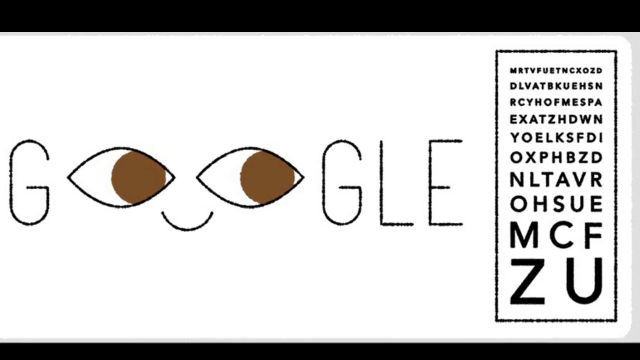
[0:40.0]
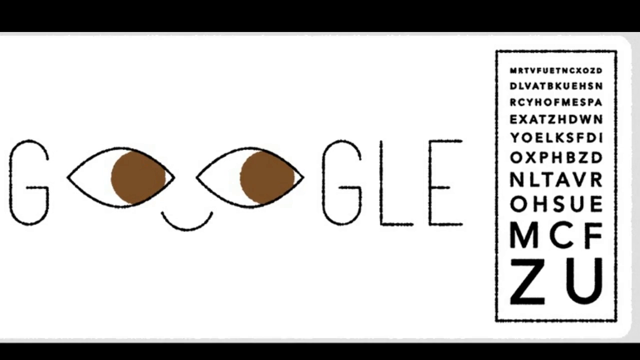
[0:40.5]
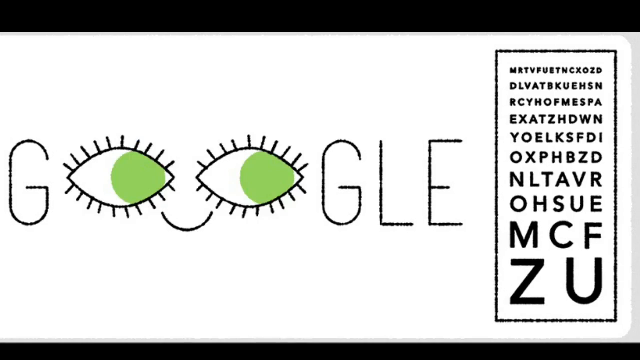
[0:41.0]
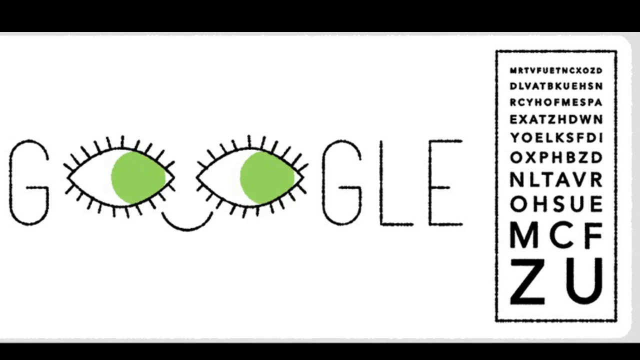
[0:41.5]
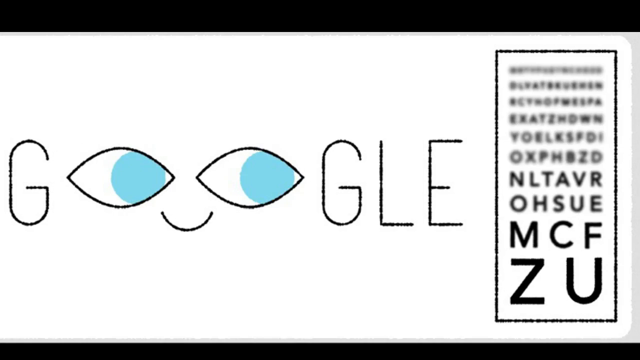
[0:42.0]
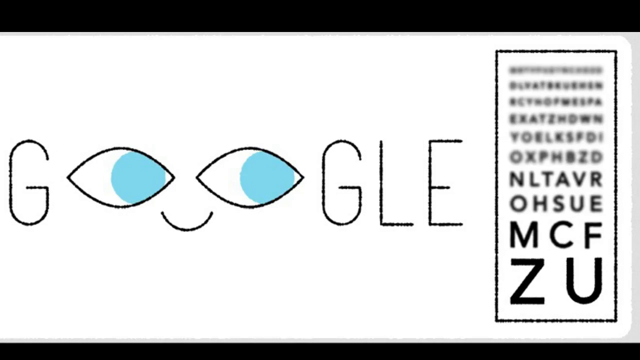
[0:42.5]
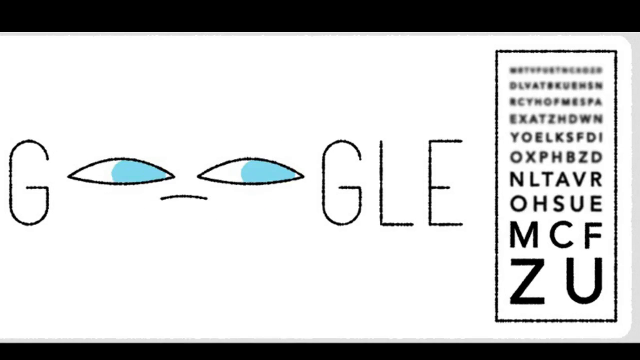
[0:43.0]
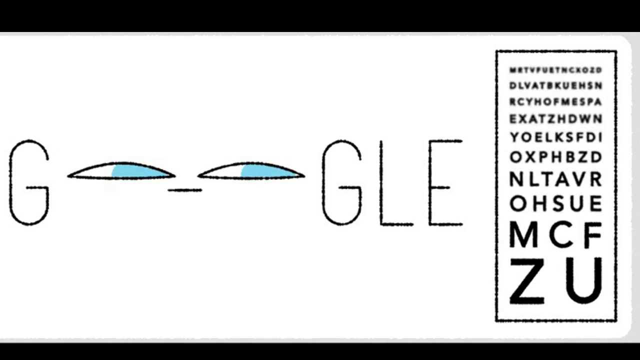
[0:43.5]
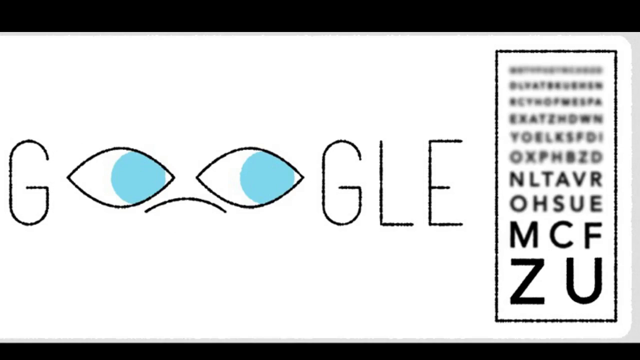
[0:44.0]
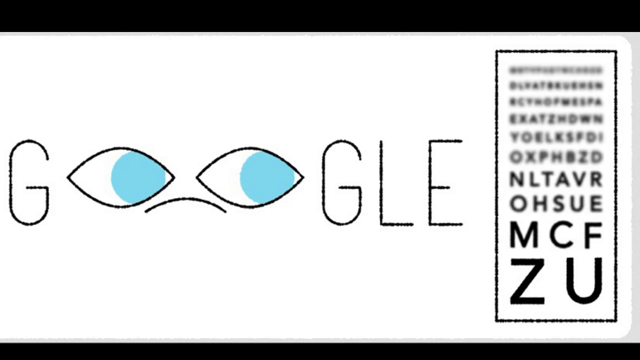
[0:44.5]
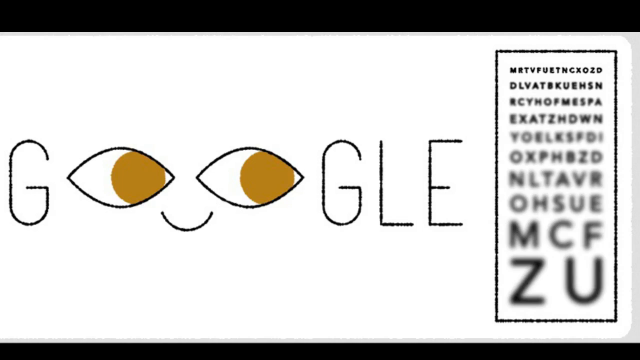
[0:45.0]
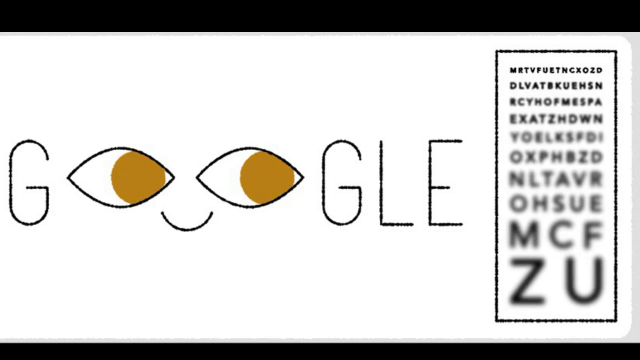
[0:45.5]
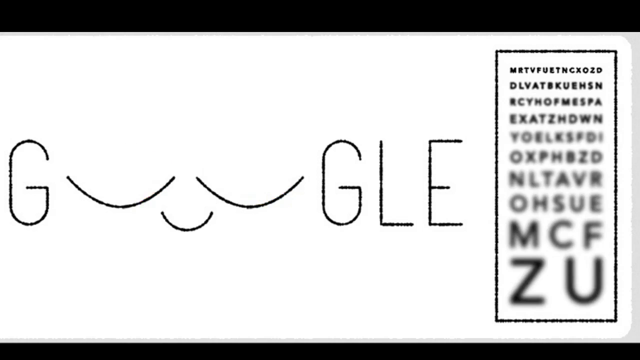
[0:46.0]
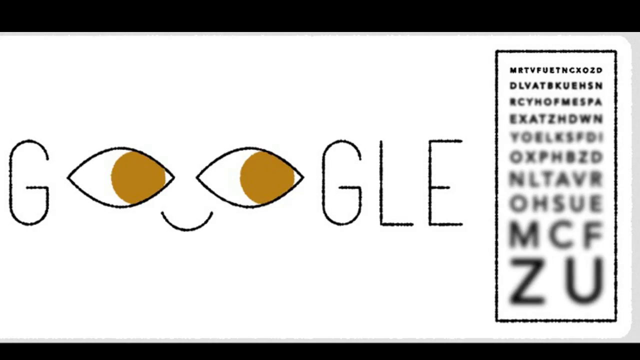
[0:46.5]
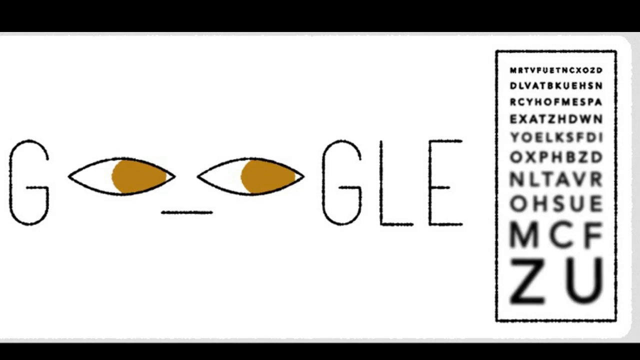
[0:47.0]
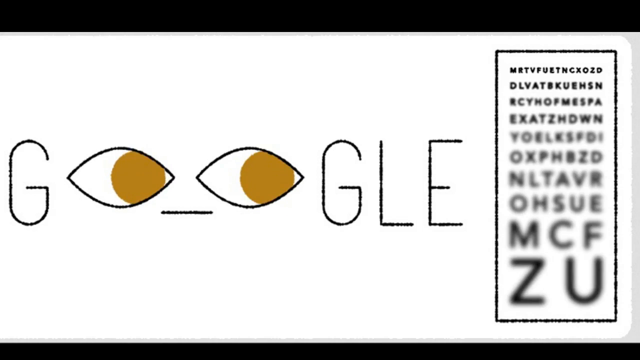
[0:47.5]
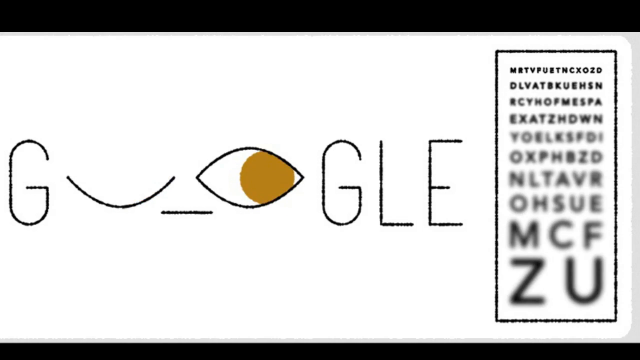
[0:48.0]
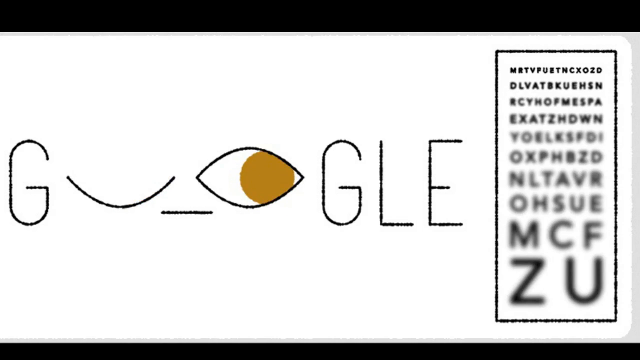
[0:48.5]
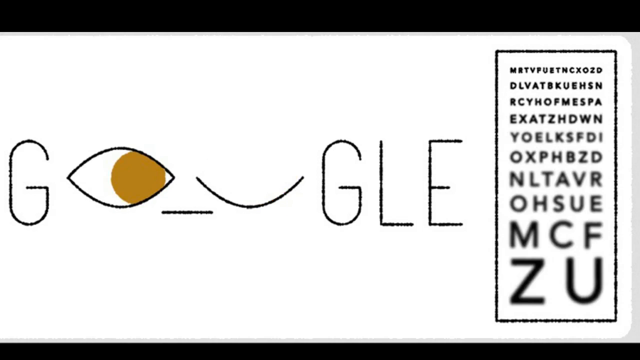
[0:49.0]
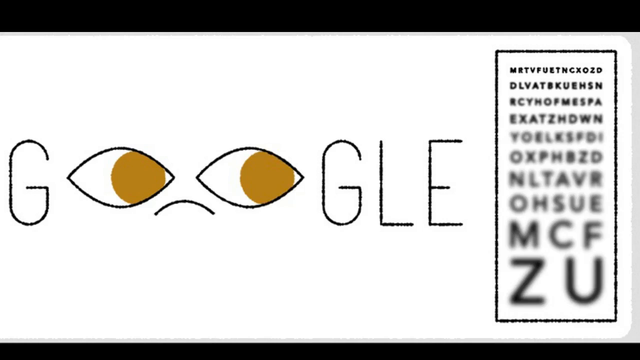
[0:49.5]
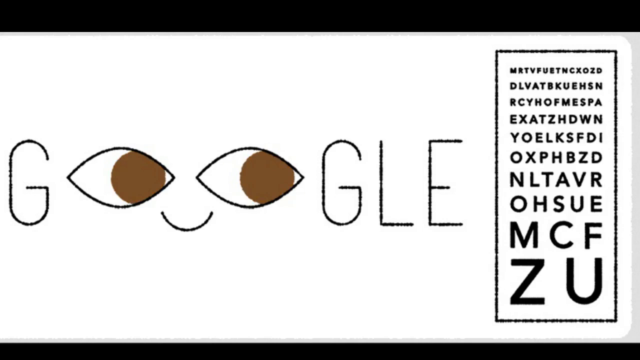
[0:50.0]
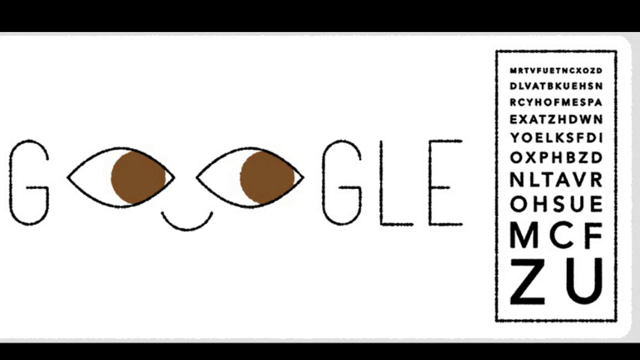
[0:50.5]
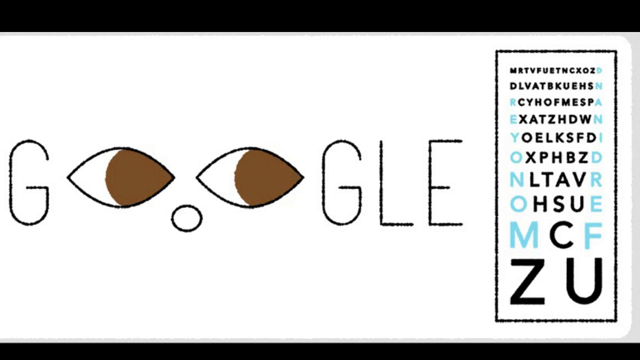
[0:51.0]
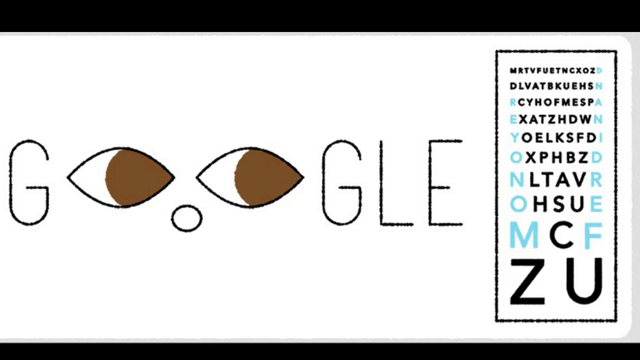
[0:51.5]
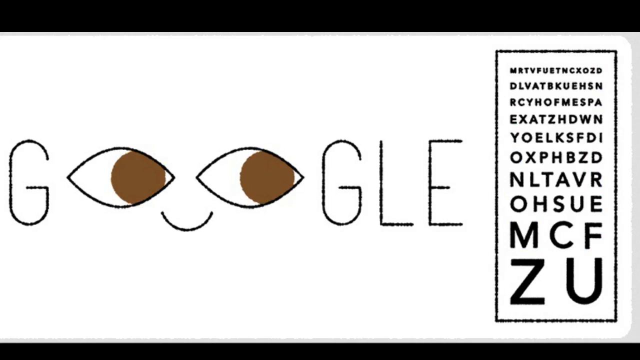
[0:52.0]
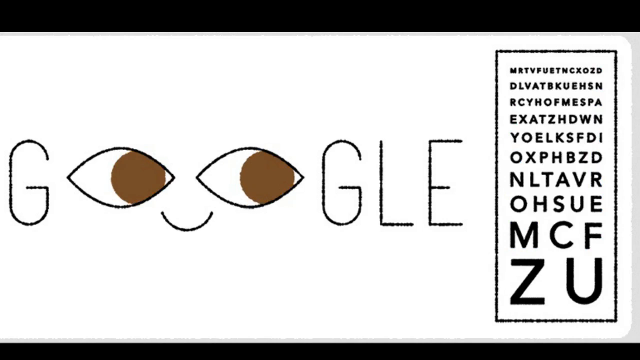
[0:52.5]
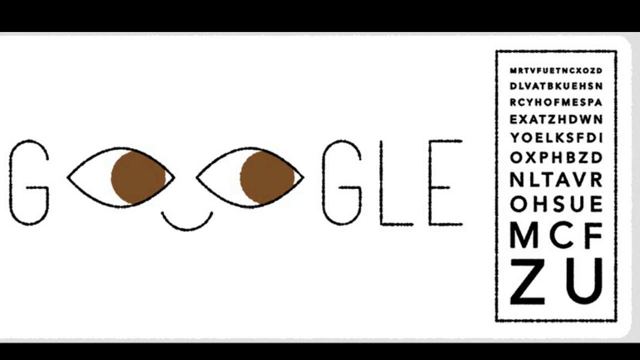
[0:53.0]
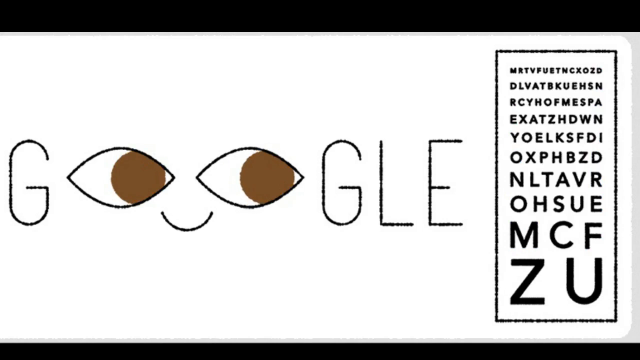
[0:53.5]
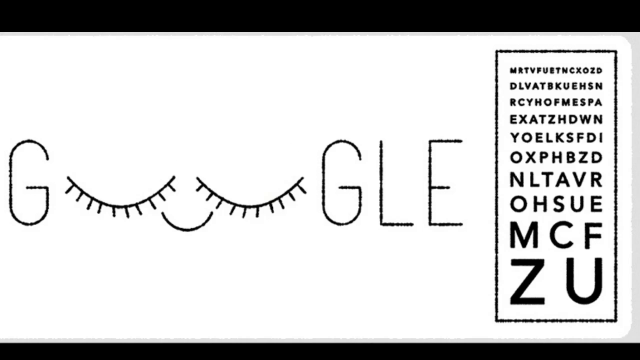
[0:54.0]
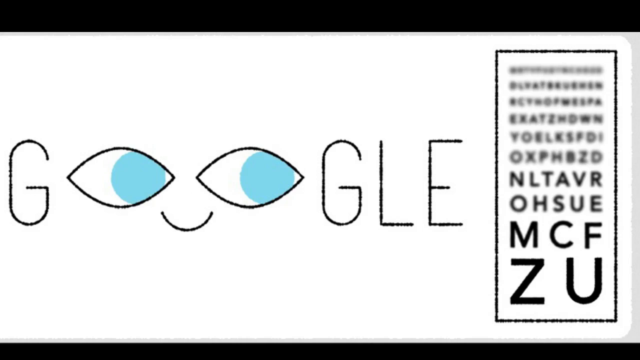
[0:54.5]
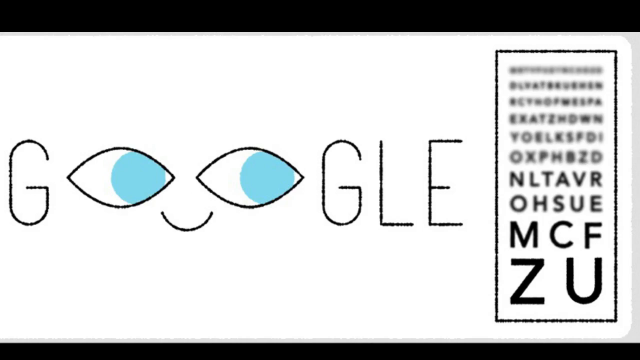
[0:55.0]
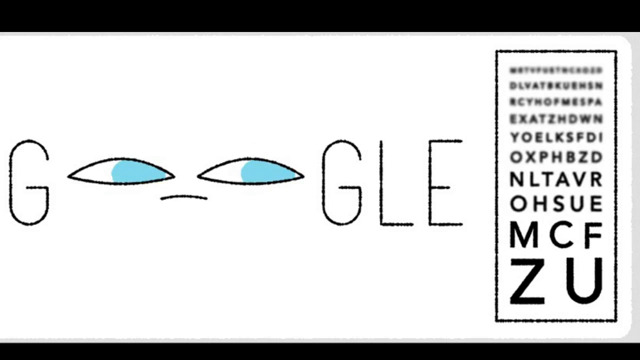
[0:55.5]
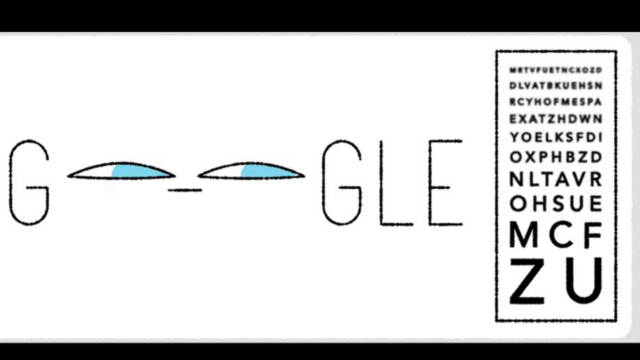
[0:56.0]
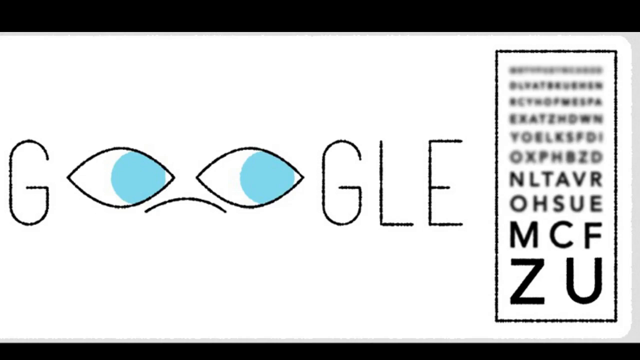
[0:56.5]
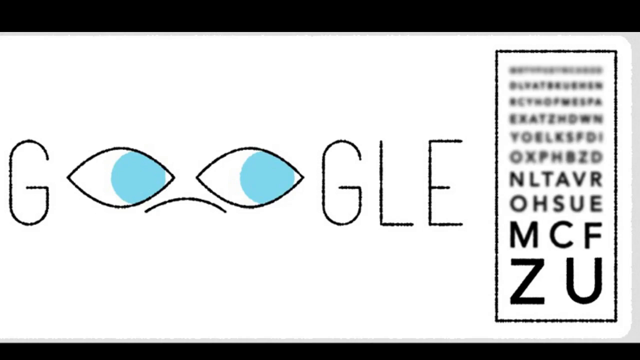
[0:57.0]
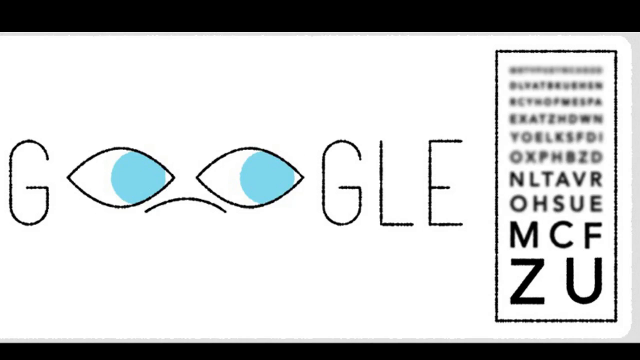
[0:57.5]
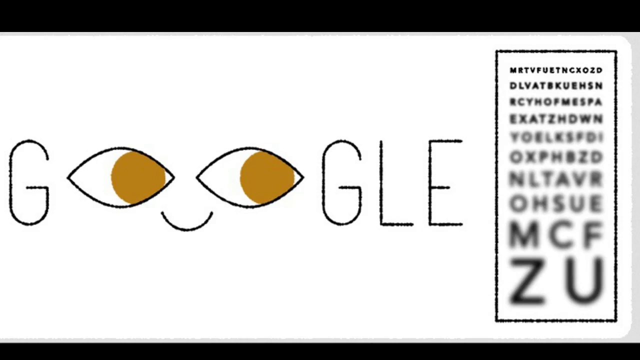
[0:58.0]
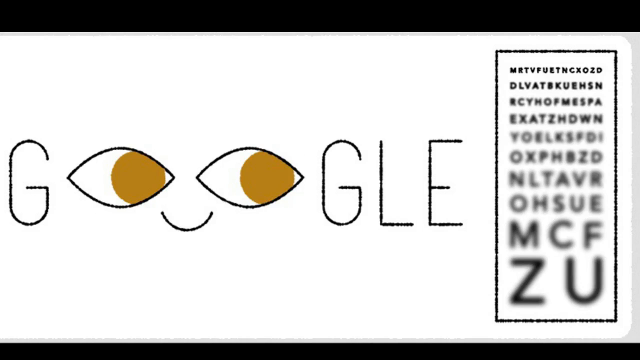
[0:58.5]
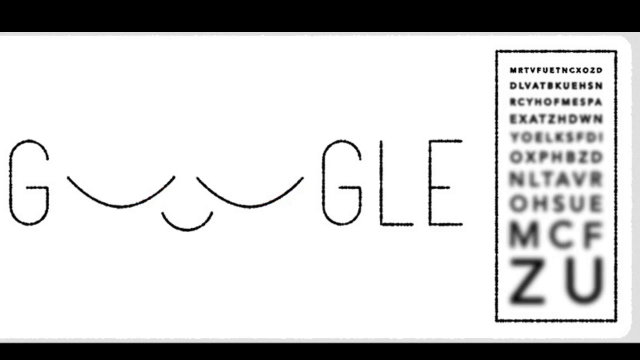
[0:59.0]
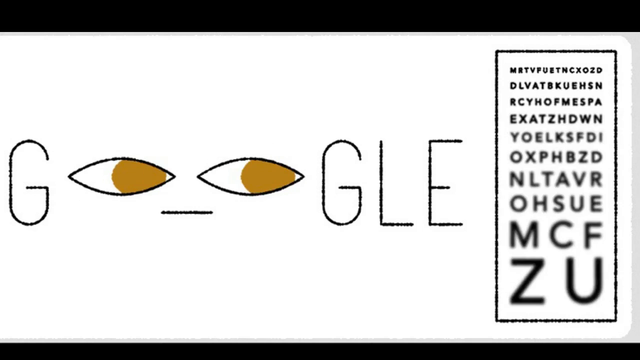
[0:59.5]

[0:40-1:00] On the right side of the screen is a black rectangle with letters inside it, what appears to be the eye chart. A large black rectangle is outlined in the middle of the chart, which is white, and all of the letters are written in black. There are 10 rows of letters; the letters are smaller at the top and get larger down the rows, while the number of letters across each row gets incrementally smaller going down. The eyes in the word Google keep changing: sad eyes, happy eyes, blinking eyes, winking eyes, a smiling face, a shocked face, green eyes, light blue eyes, sad eyes with a sad mouth, and happy brown eyes with a curved smiling mouth. The changes consist of the two eyes and the mouth.